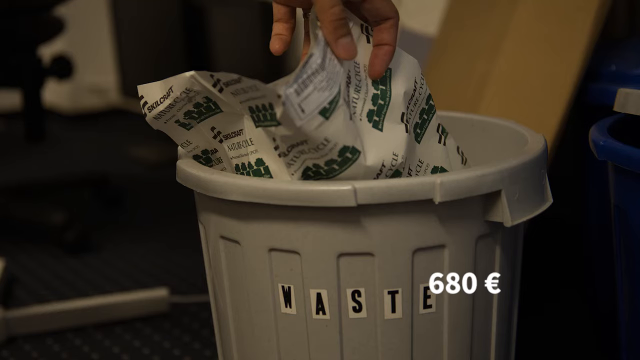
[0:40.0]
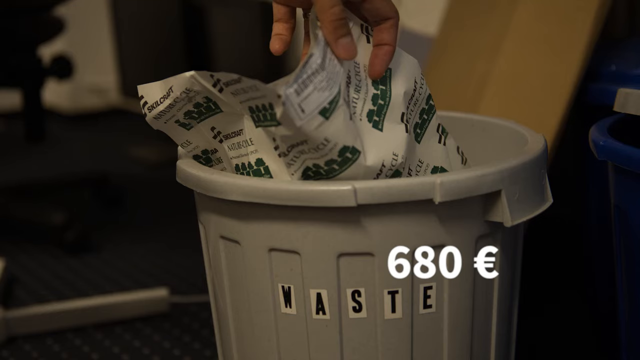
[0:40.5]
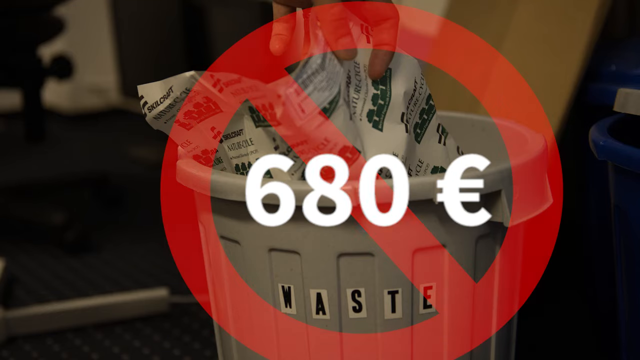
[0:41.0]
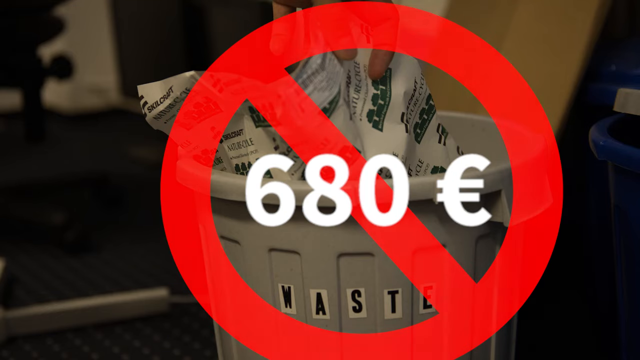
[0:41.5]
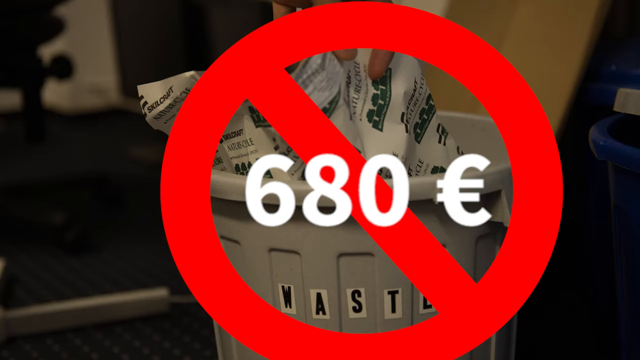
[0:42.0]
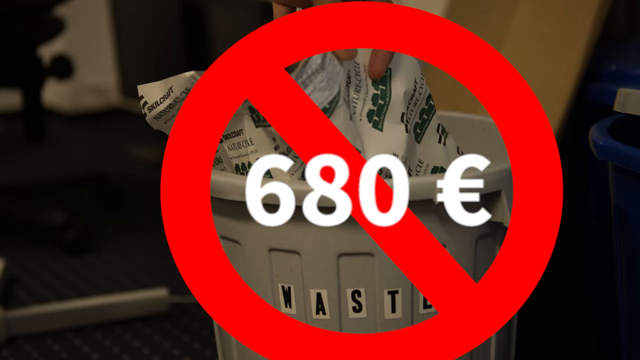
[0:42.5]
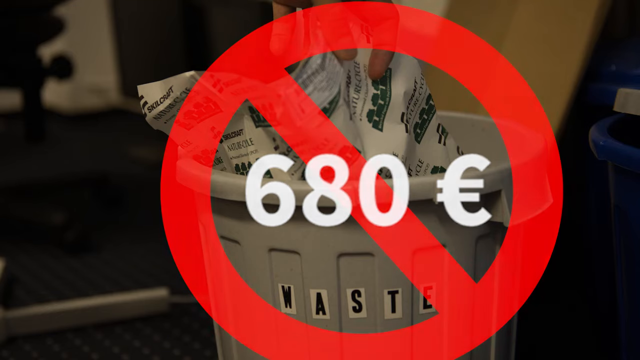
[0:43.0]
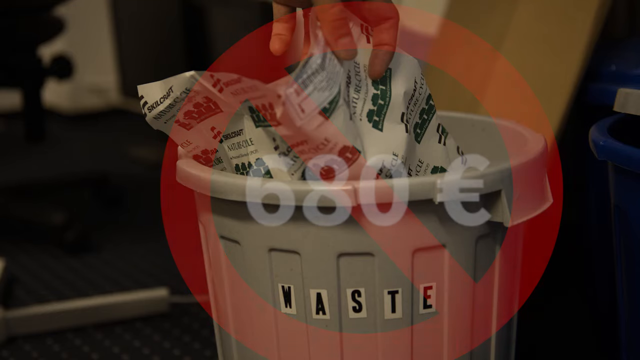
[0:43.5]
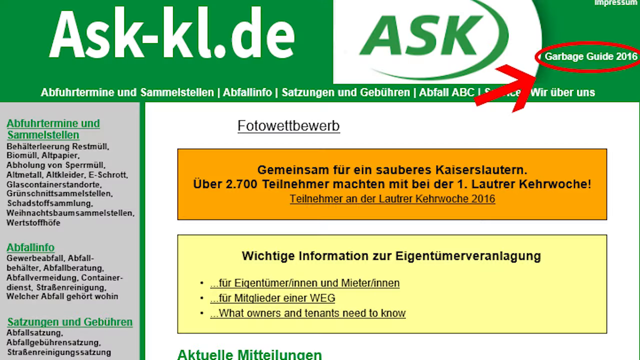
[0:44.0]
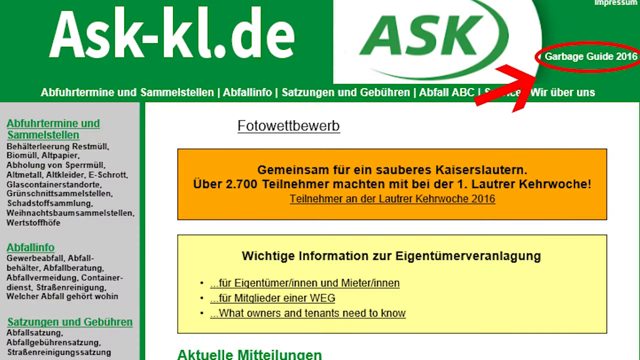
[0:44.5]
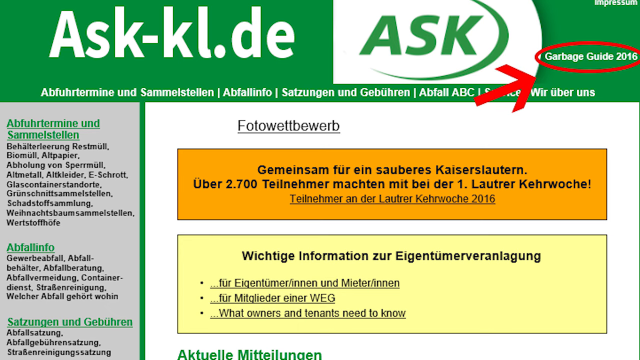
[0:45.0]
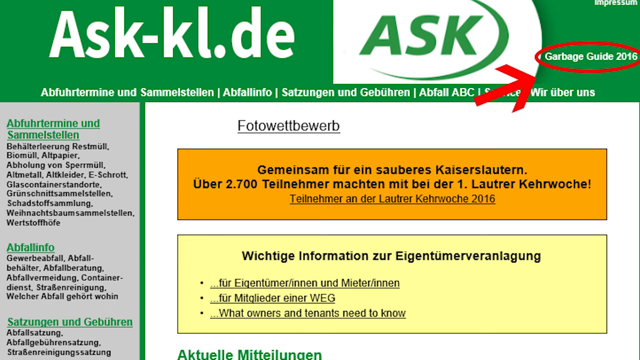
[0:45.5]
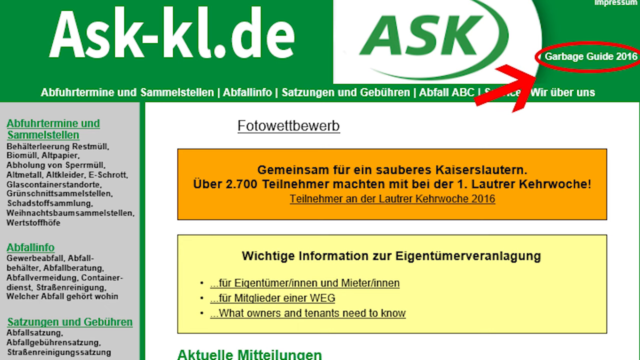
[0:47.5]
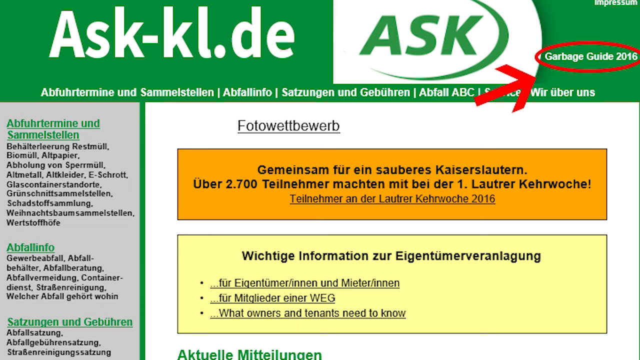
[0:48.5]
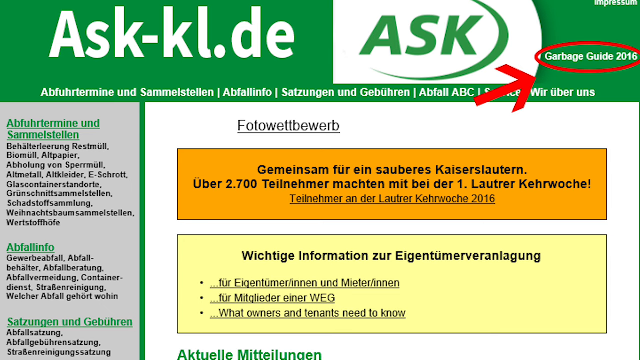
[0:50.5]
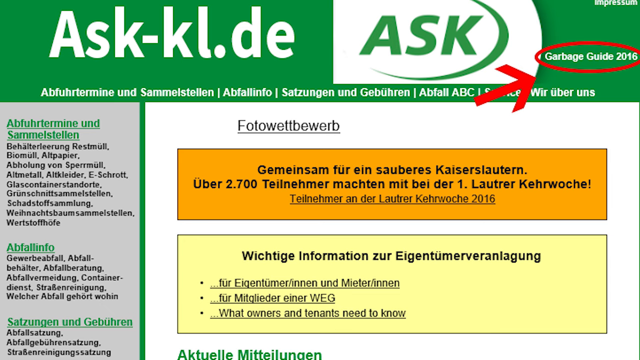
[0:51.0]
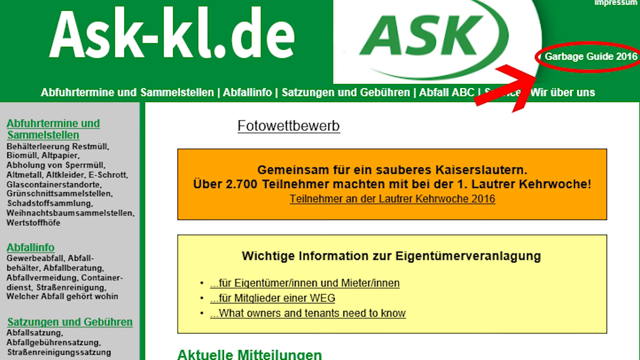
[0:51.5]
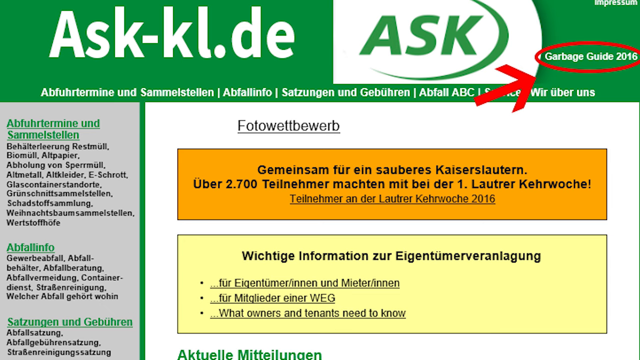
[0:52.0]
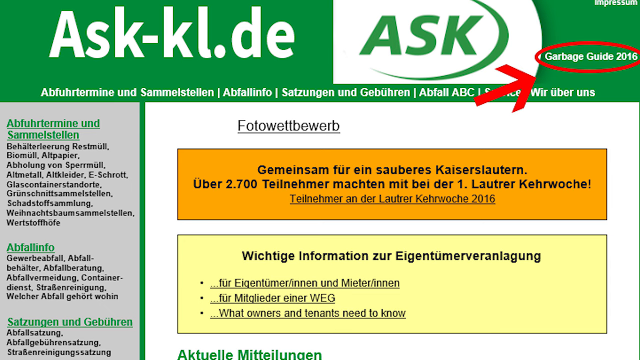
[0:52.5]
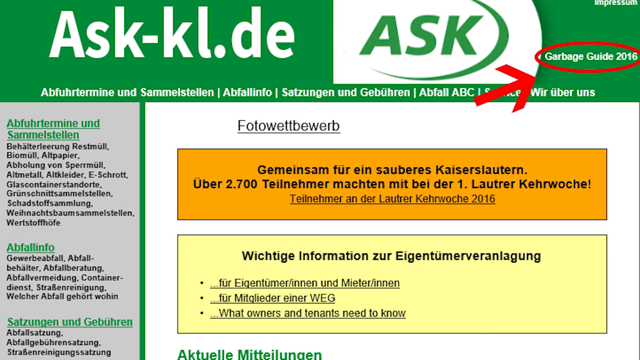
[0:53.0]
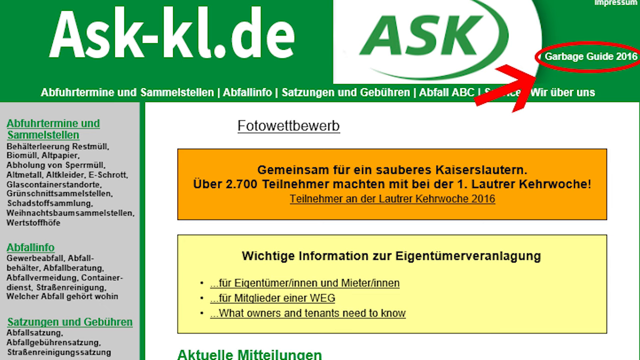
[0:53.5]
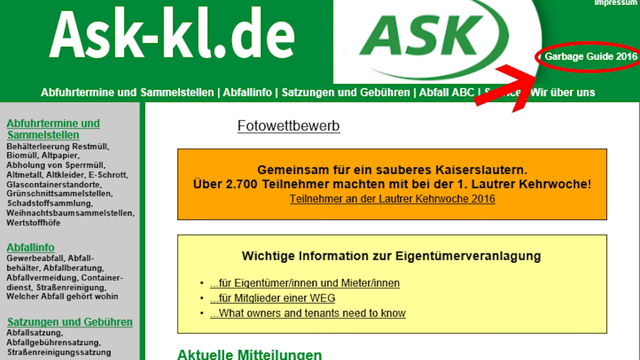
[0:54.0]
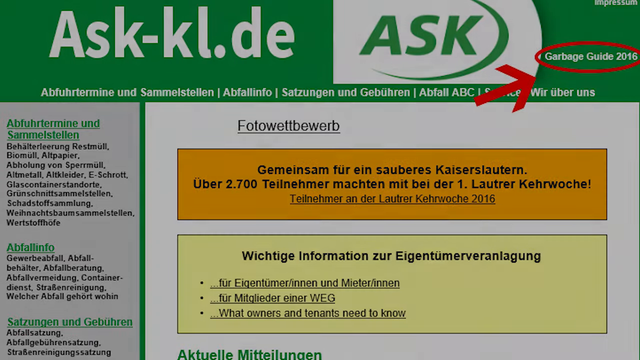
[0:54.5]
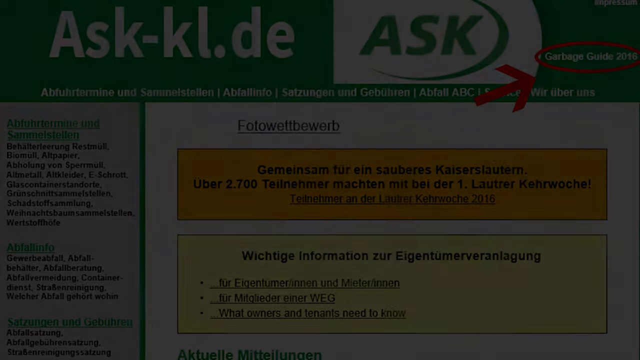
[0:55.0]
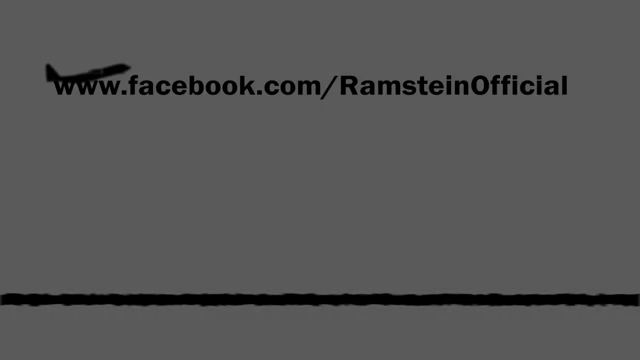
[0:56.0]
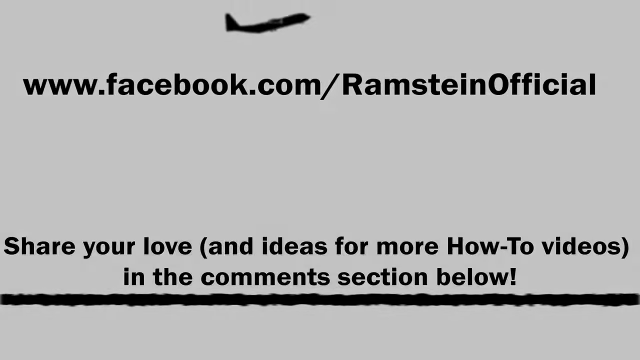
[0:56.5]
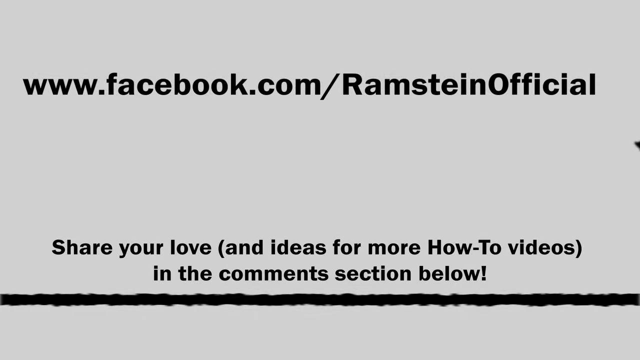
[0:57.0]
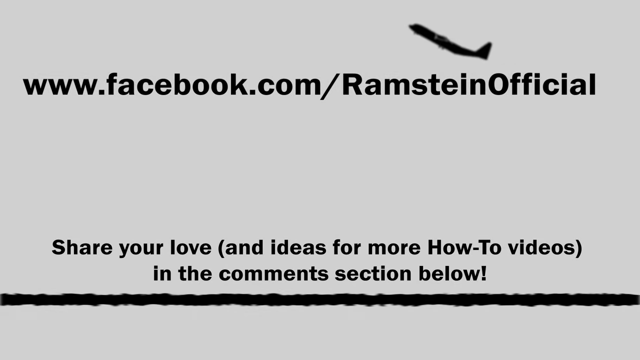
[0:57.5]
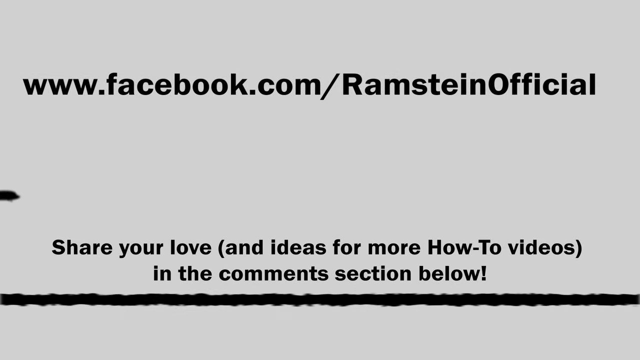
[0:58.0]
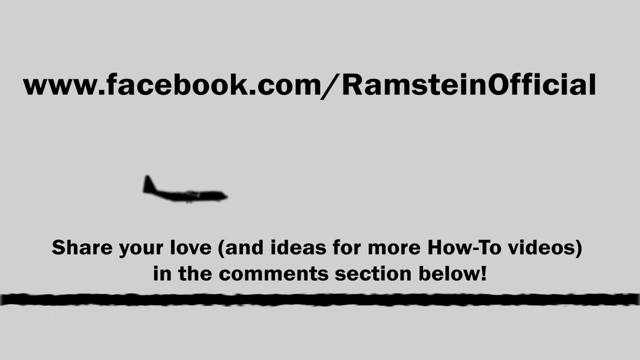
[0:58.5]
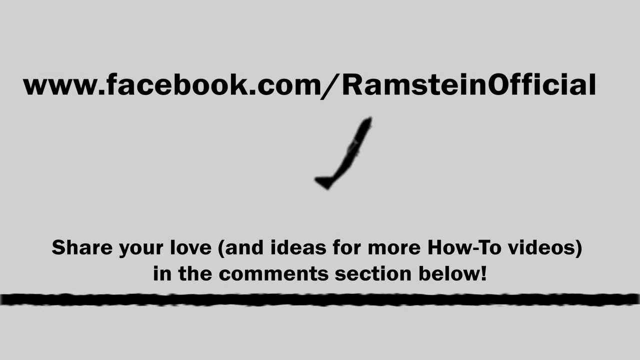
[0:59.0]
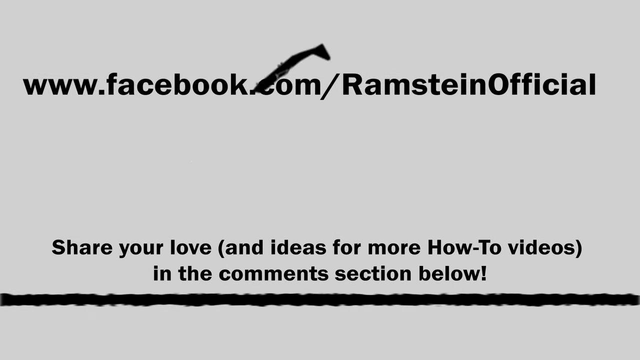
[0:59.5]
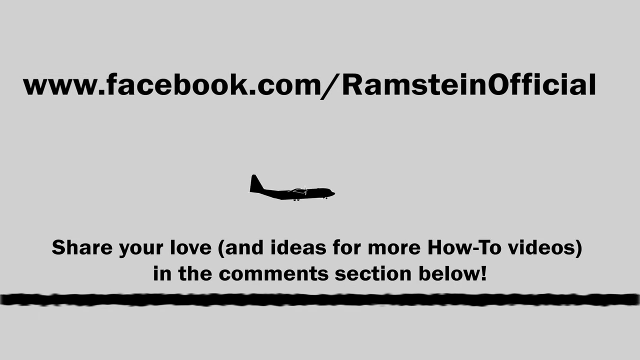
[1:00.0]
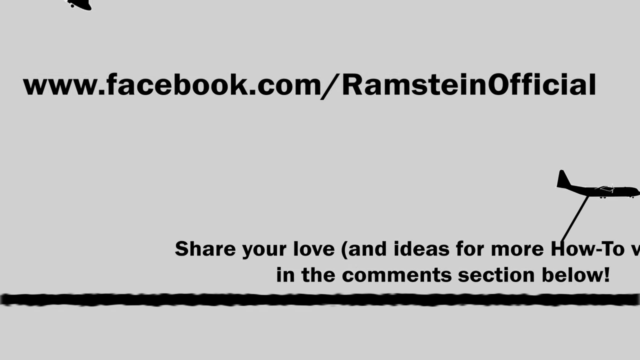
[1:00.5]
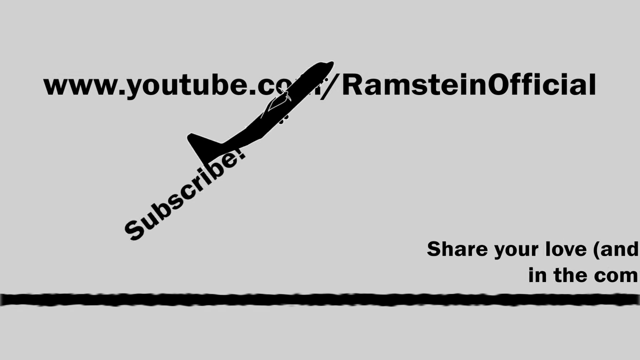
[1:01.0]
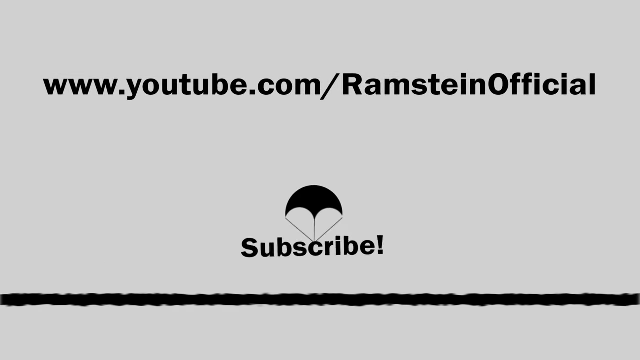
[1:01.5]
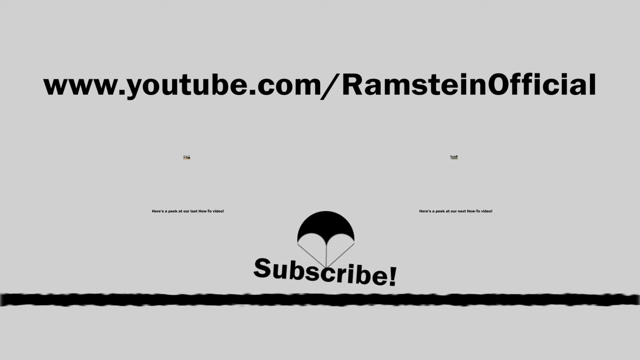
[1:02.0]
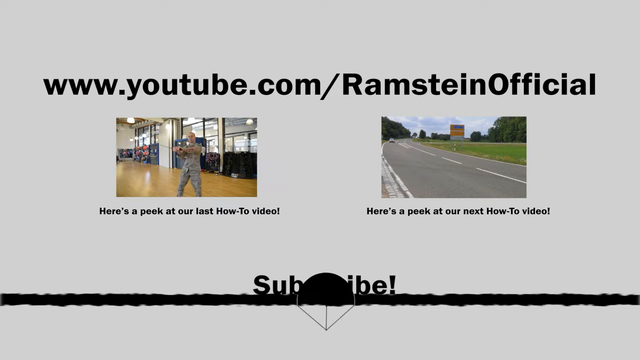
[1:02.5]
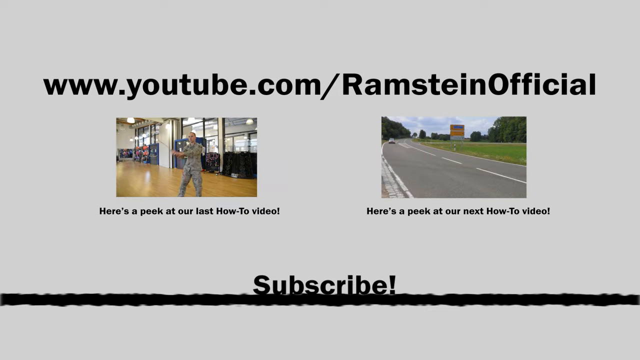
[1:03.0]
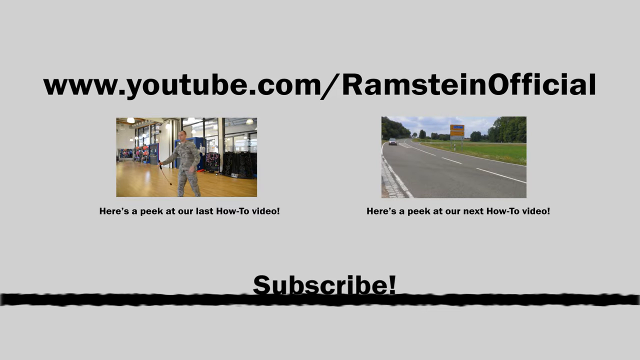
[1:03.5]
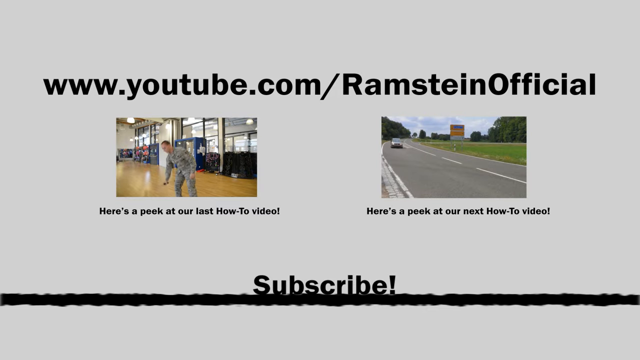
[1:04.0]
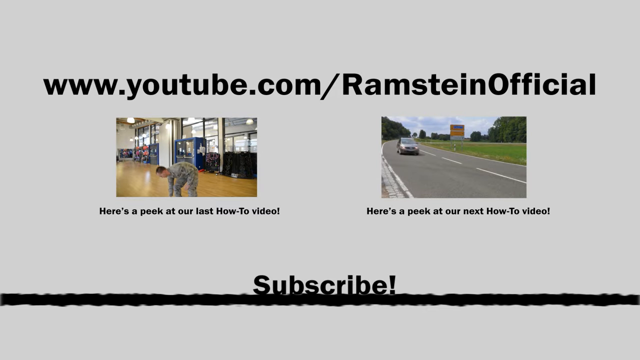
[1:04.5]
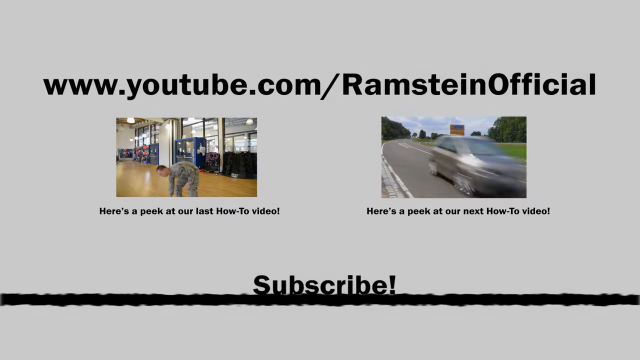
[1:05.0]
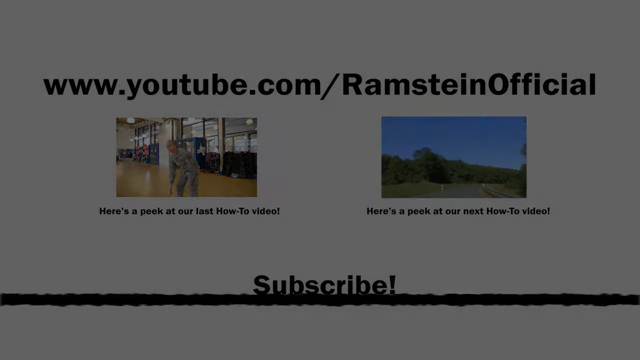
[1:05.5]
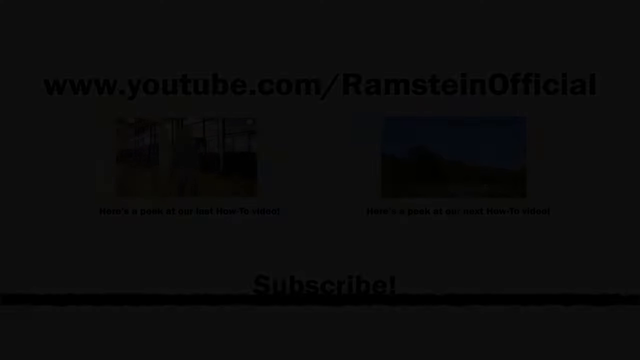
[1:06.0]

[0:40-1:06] A brochure is shown with "ask k-o-l-d-e-r" on it and "garbage guide" in the corner; its text is written in a language other than English. The brochure about the garbage guide continues to be shown. Then a Facebook link appears, "www.facebook.com rammstein official", along with the text "share your love and ideas for more how-to videos in the comment section below". A prompt to subscribe is also shown.